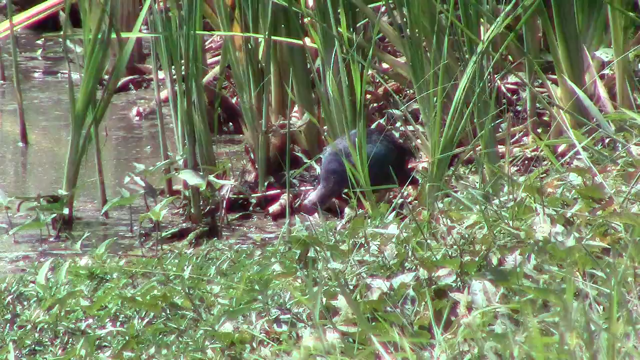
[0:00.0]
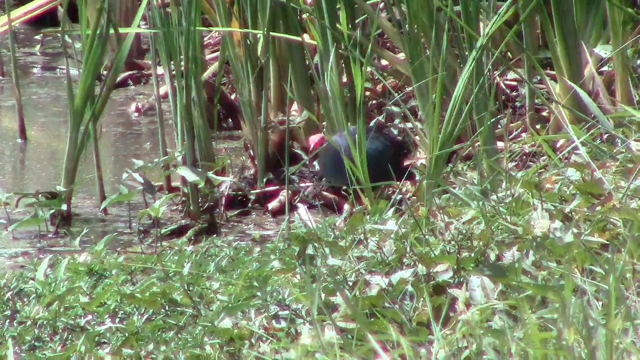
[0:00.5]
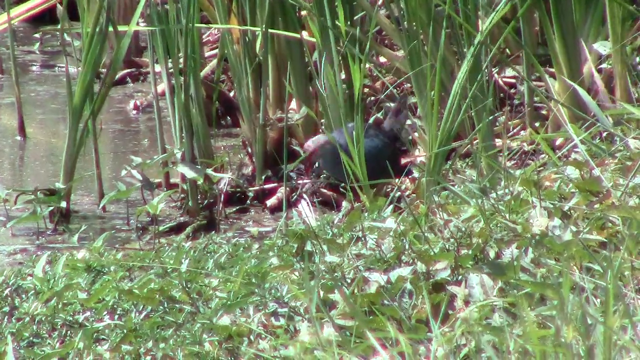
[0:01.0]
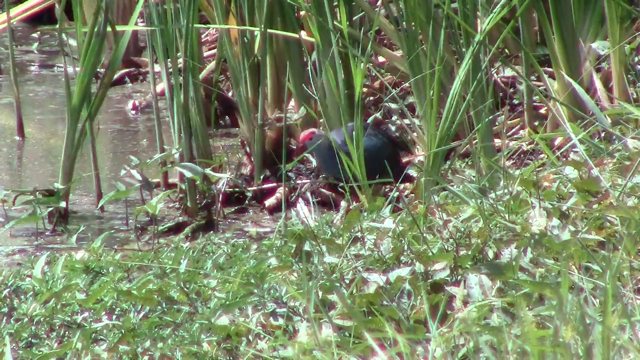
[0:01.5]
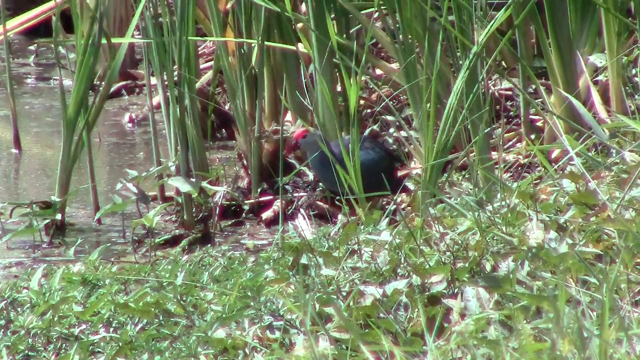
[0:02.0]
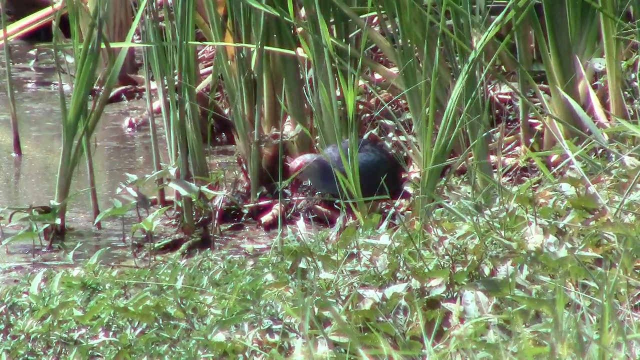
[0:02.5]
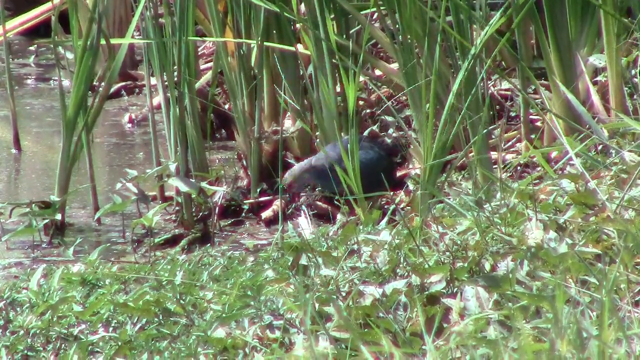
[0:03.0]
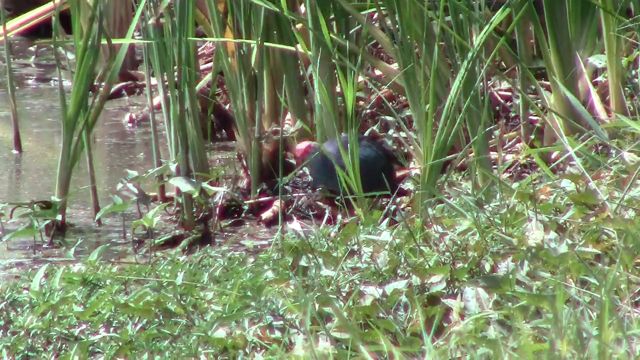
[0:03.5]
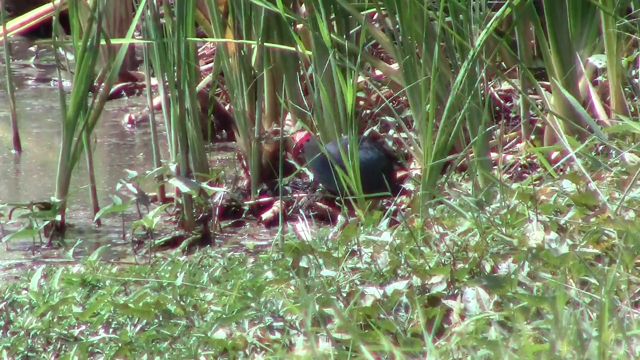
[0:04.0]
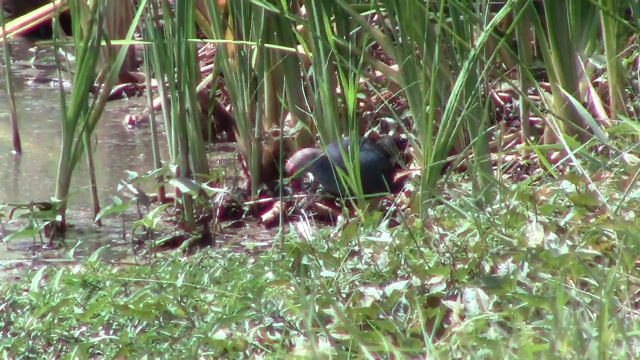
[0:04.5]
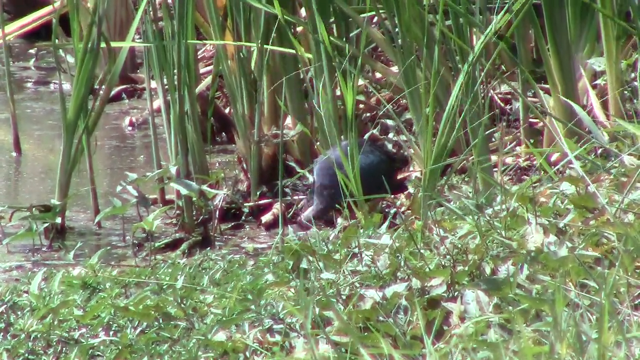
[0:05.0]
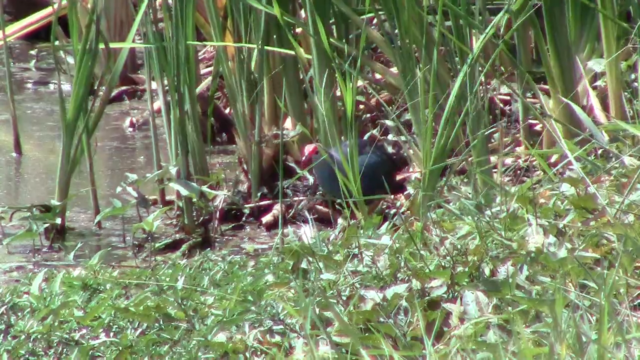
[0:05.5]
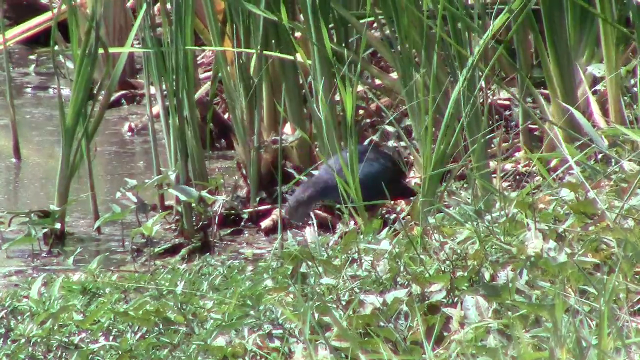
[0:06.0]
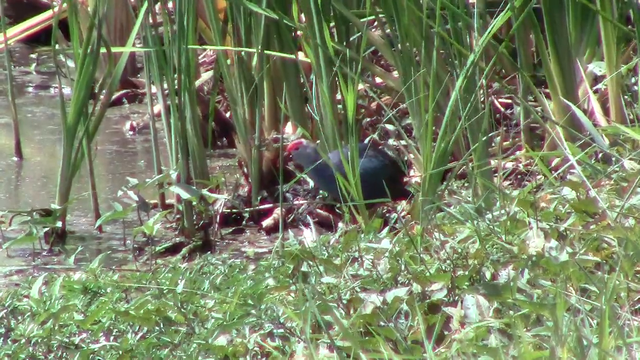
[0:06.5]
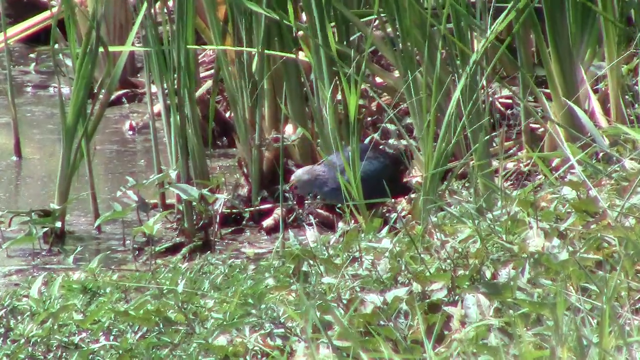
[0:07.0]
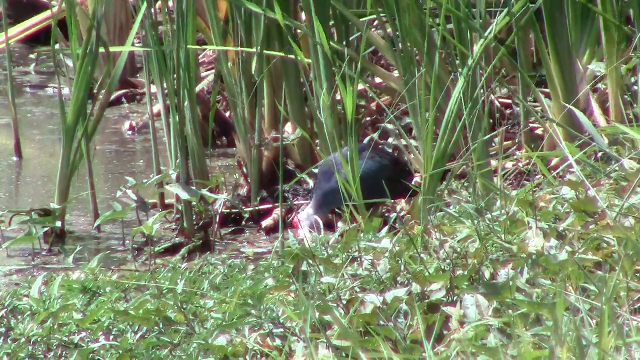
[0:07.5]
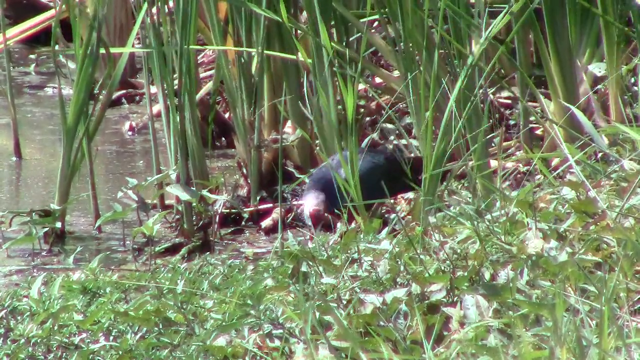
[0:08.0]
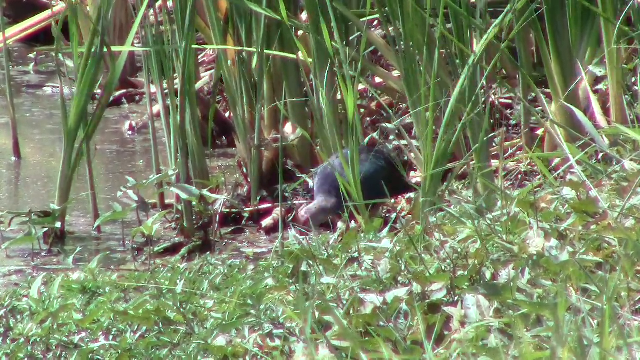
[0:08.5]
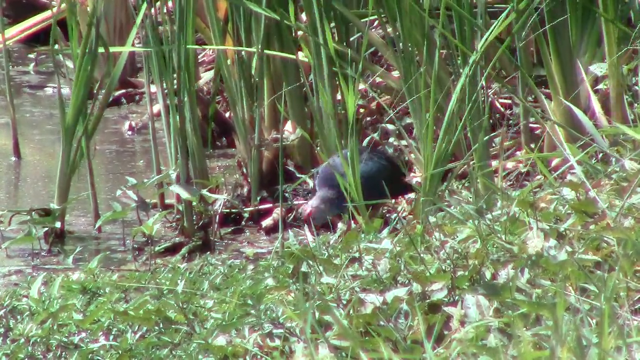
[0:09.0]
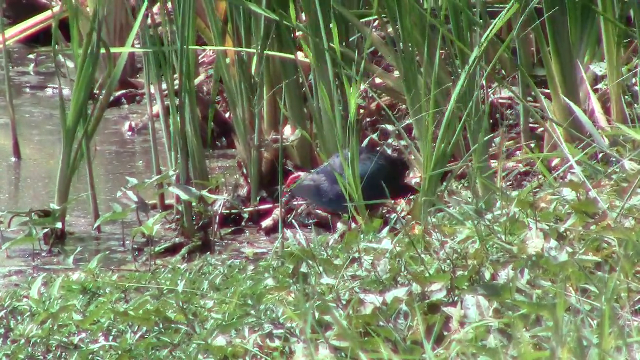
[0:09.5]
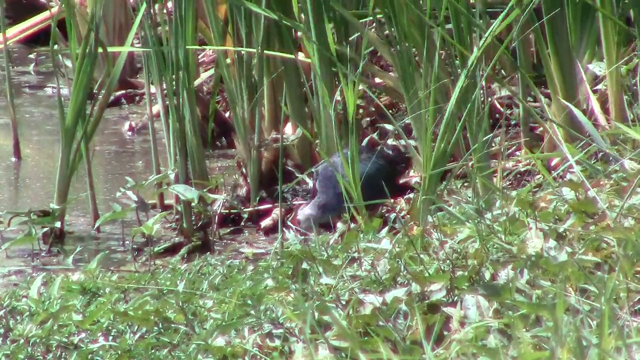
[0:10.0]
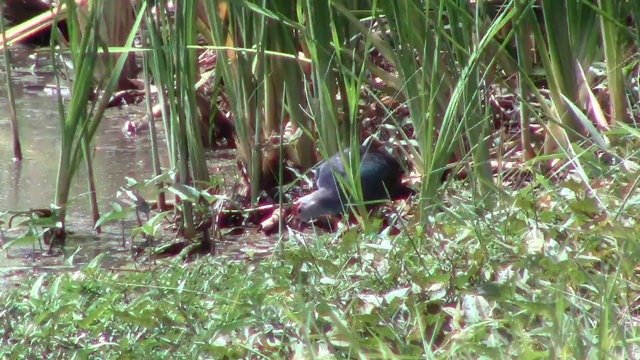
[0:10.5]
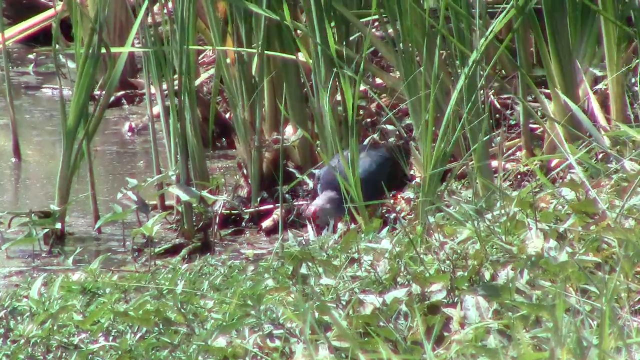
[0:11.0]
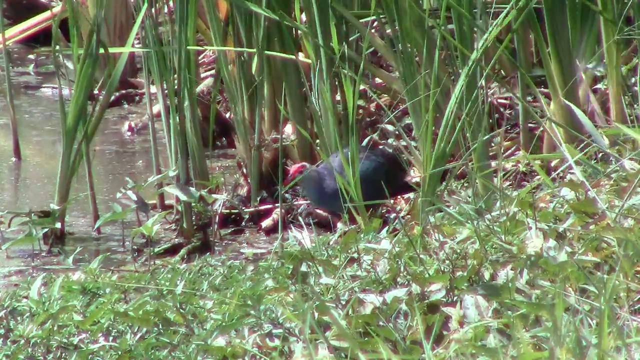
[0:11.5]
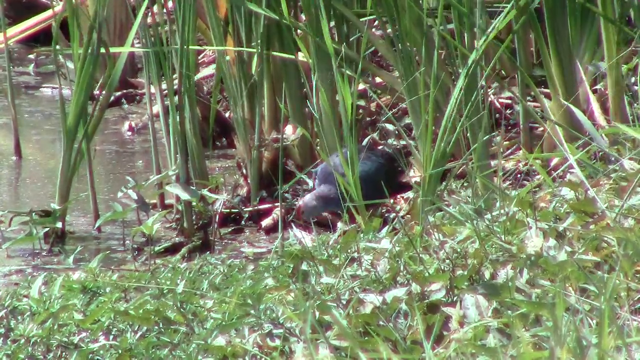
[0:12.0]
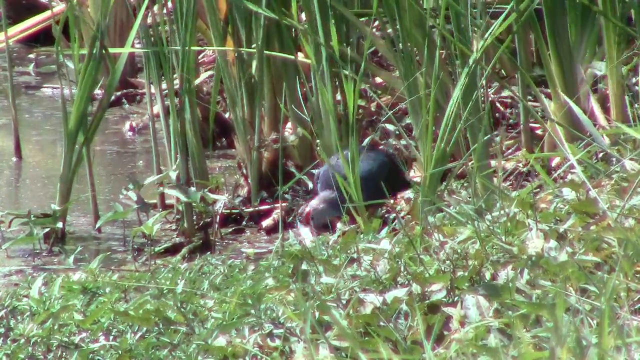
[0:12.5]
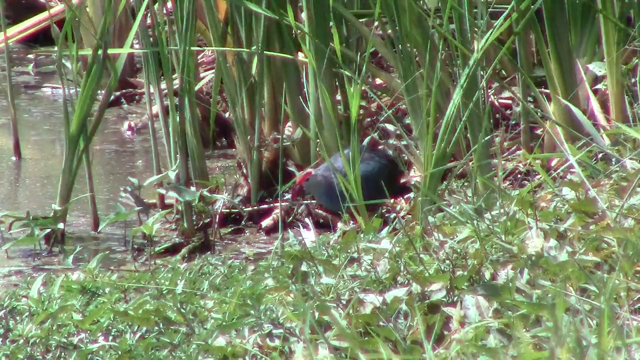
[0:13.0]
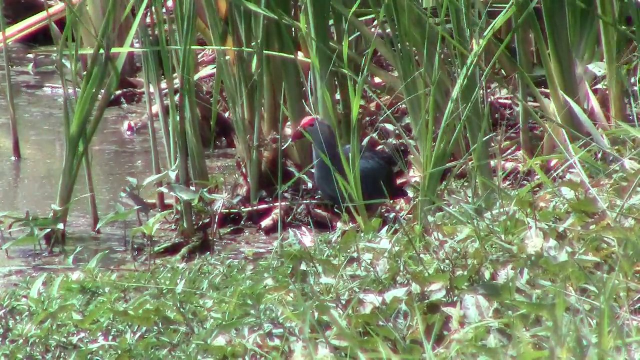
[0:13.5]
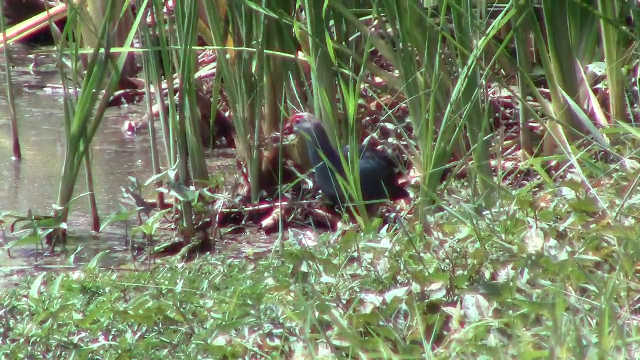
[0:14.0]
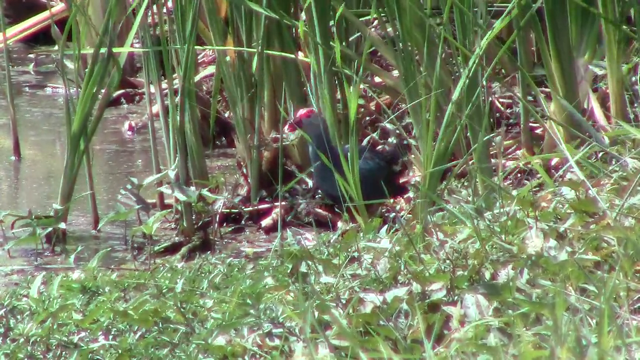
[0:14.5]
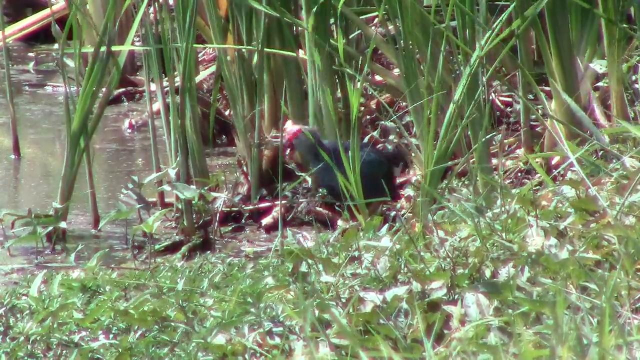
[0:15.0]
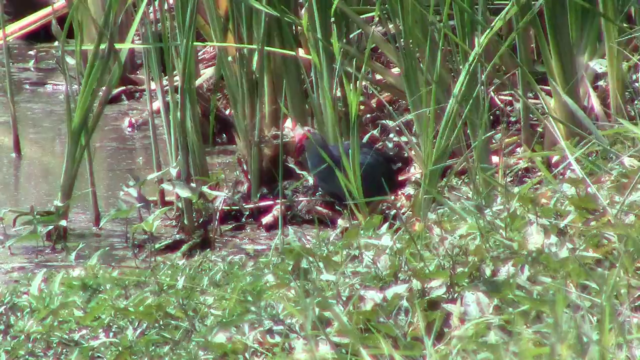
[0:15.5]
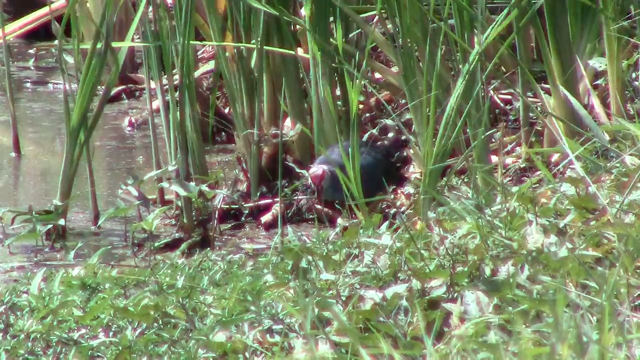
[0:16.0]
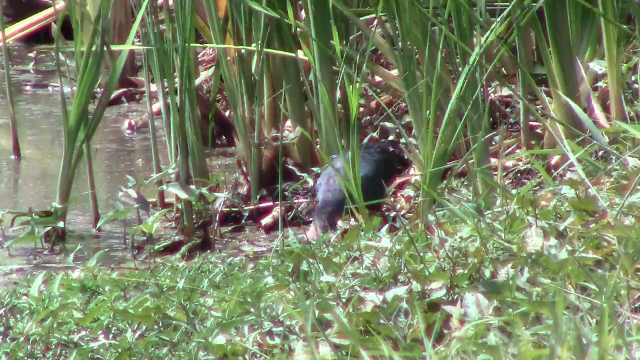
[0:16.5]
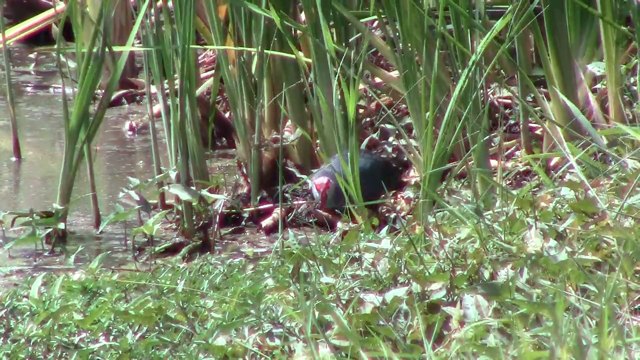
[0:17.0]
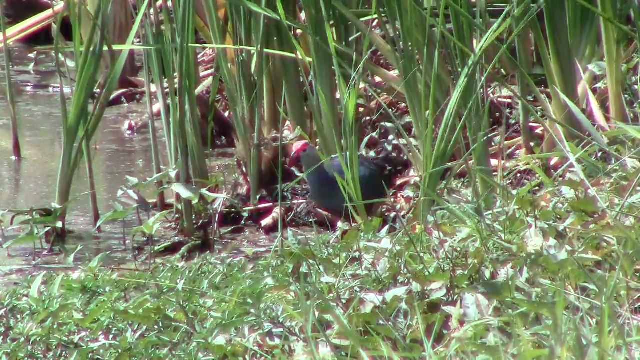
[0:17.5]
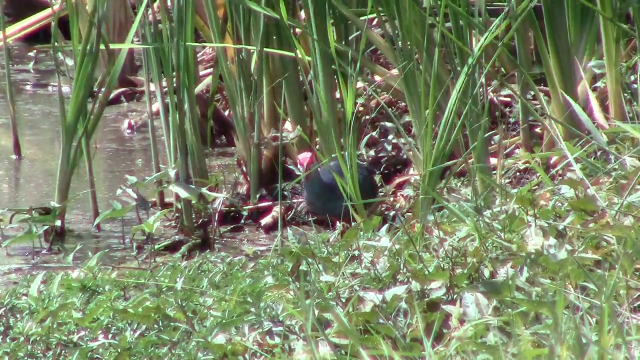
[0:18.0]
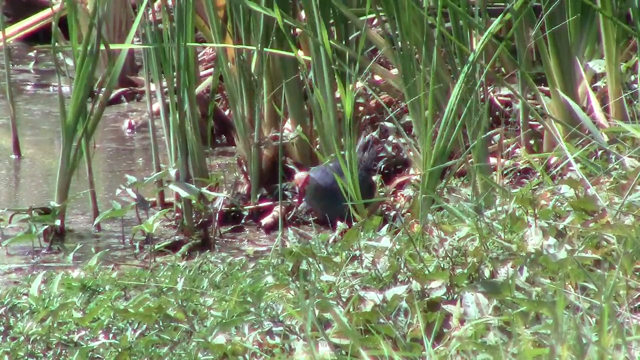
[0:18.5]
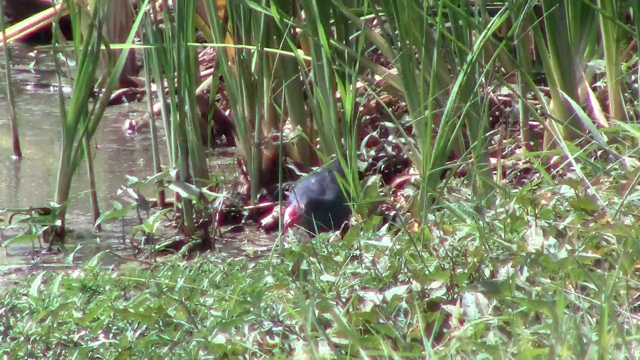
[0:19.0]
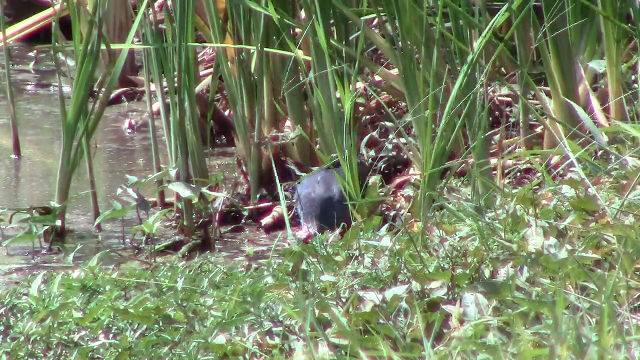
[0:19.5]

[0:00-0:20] The video shows a natural setting that looks like a swamp or a lake. Grass of different heights, somewhat tall and brown, is visible, along with a body of water. A bird that looks grey and black has a red area on its face around the middle of its beak. It keeps putting its head up and down, lowering its head all the way down; with the camera at the side, it is unclear whether its head goes all the way into the dirt. It is possibly trying to pull up food, such as a worm.